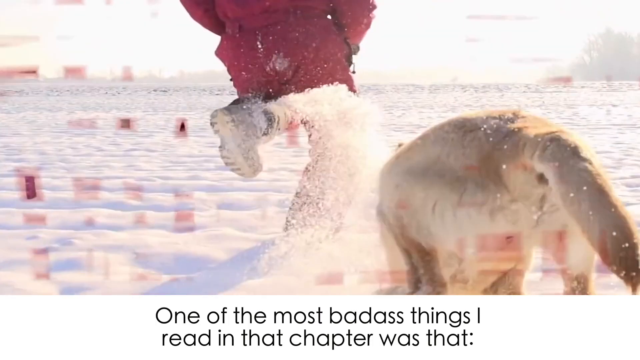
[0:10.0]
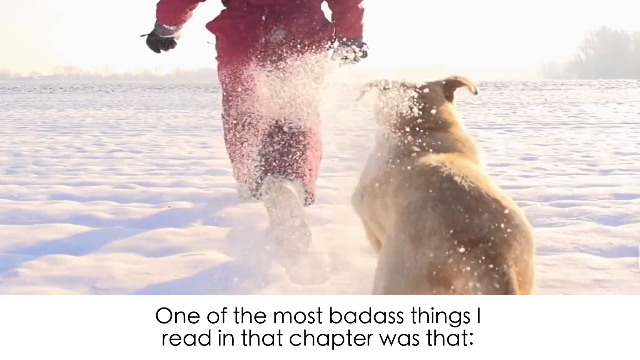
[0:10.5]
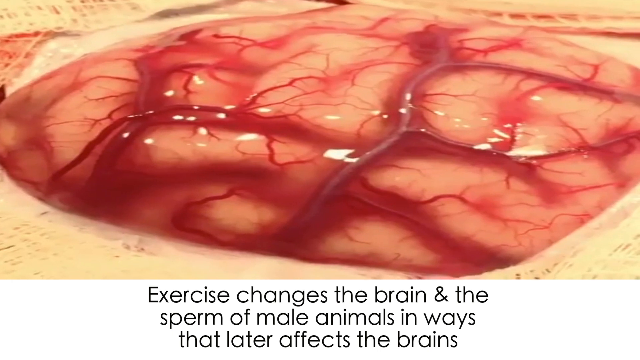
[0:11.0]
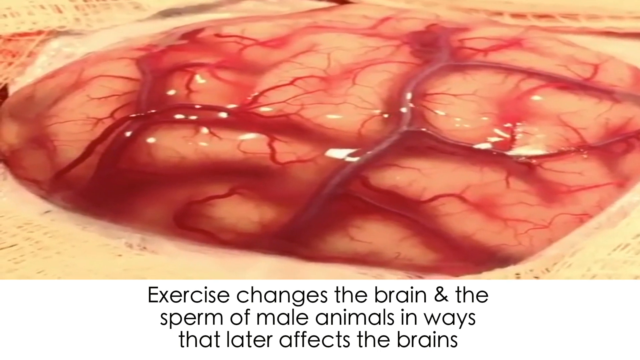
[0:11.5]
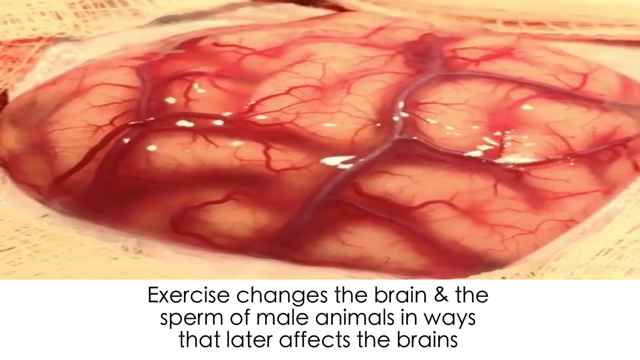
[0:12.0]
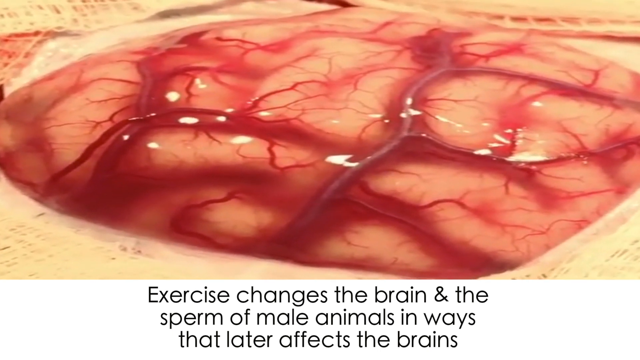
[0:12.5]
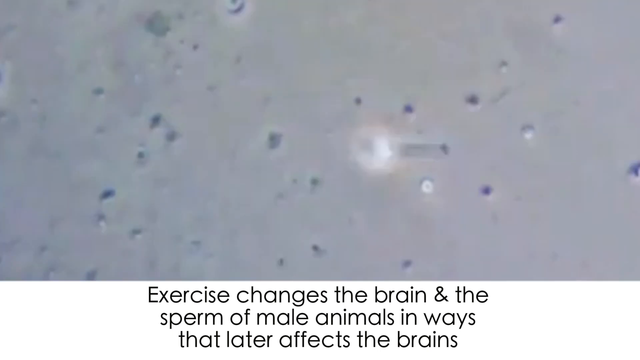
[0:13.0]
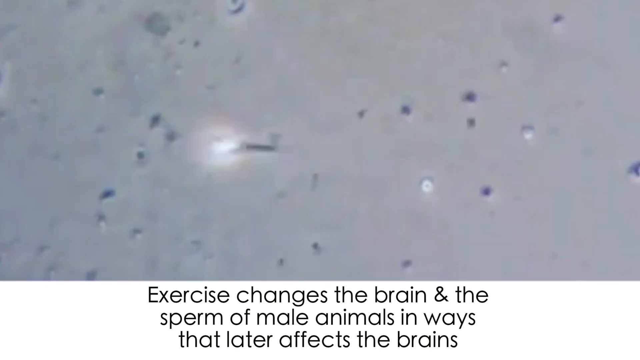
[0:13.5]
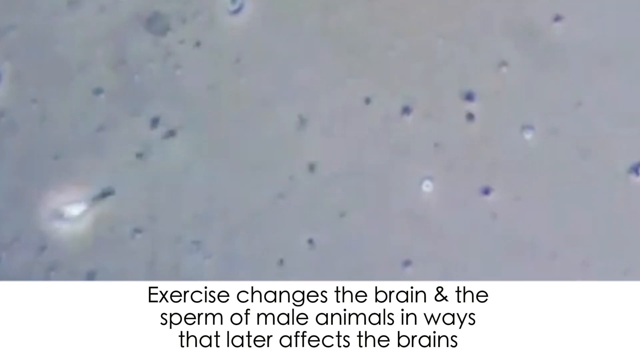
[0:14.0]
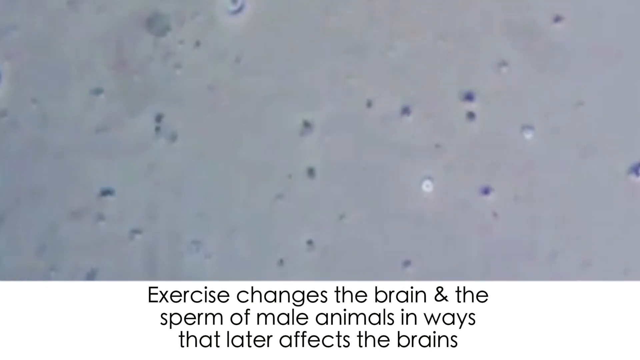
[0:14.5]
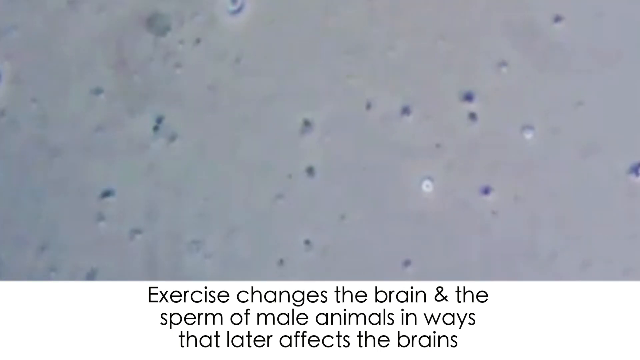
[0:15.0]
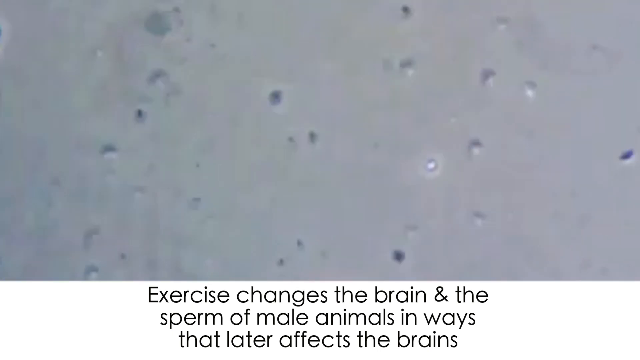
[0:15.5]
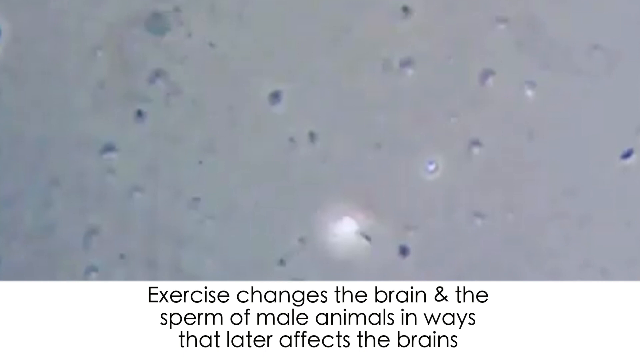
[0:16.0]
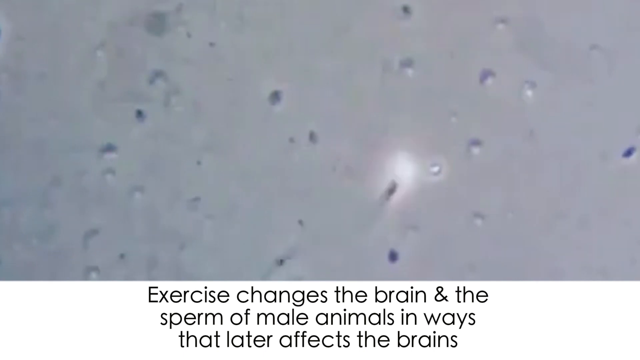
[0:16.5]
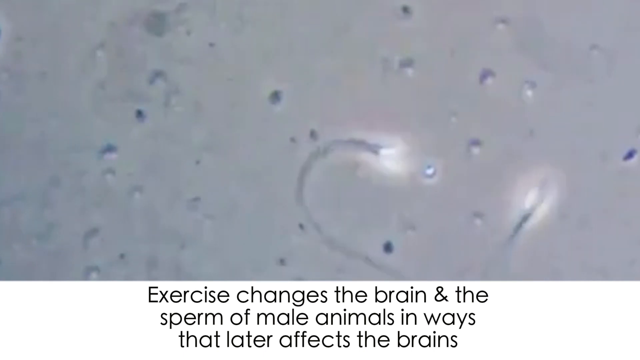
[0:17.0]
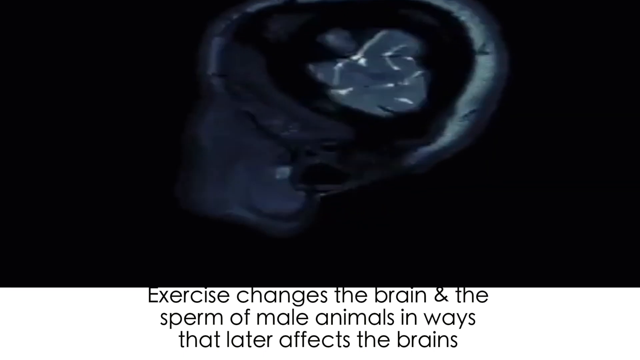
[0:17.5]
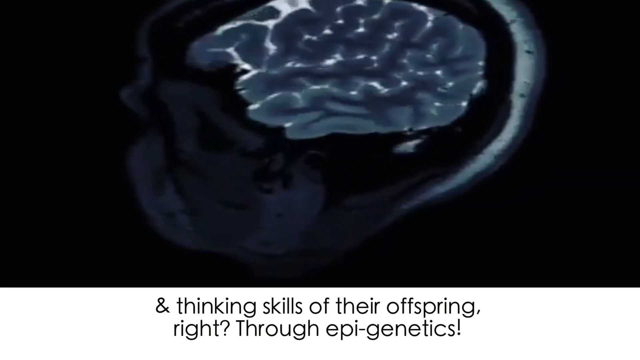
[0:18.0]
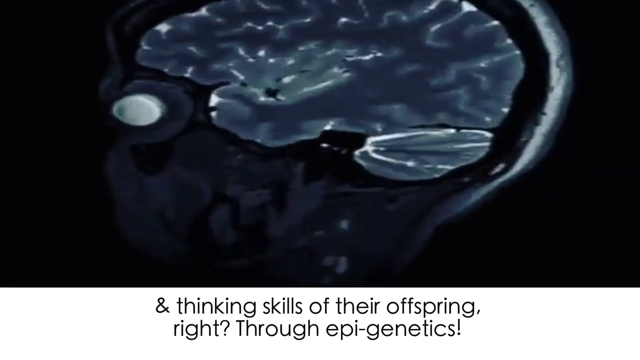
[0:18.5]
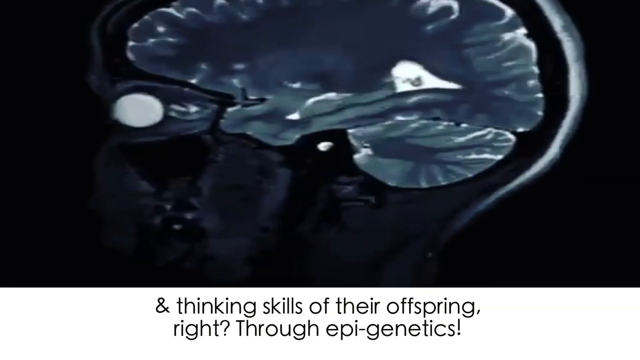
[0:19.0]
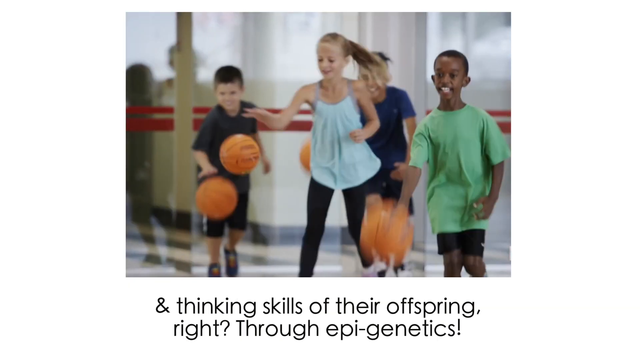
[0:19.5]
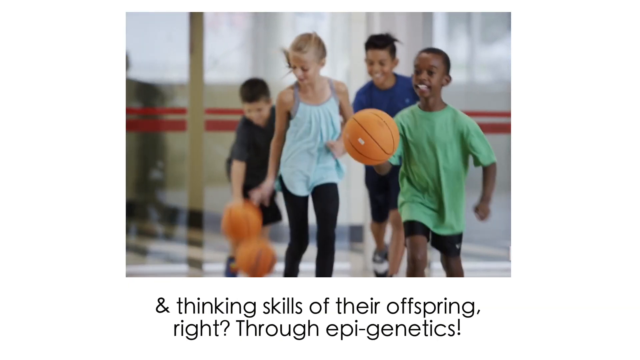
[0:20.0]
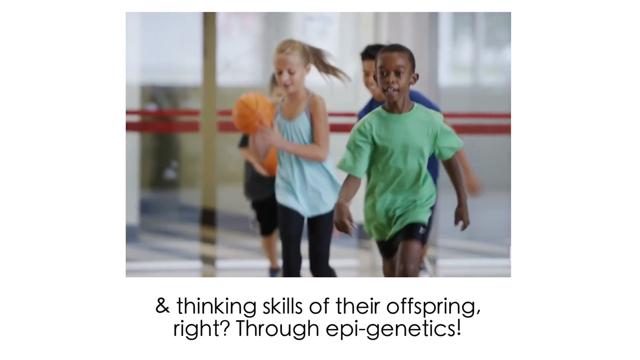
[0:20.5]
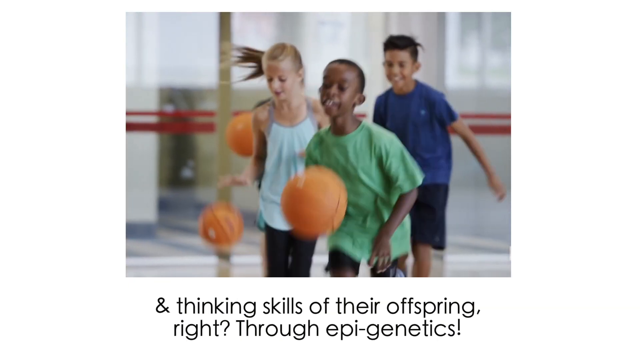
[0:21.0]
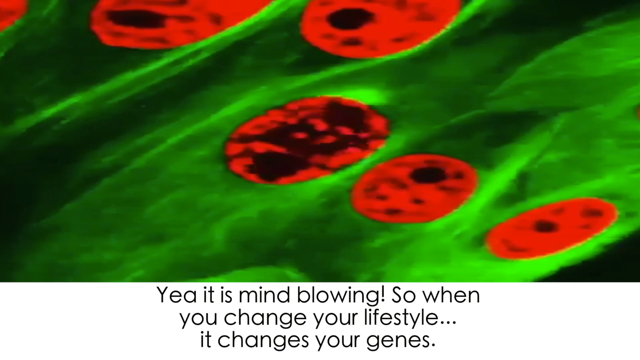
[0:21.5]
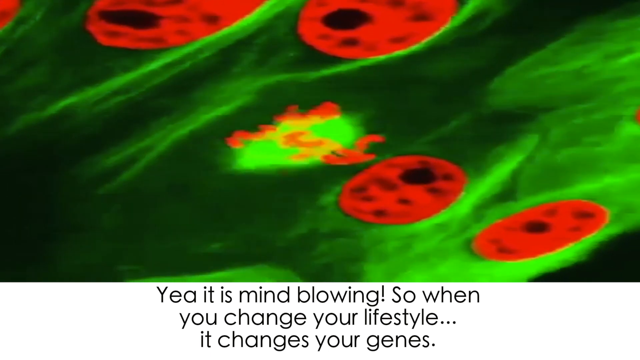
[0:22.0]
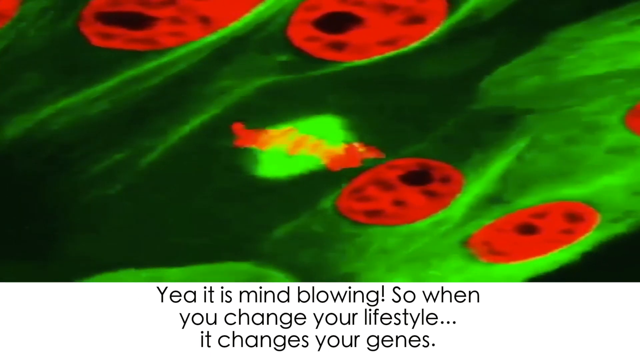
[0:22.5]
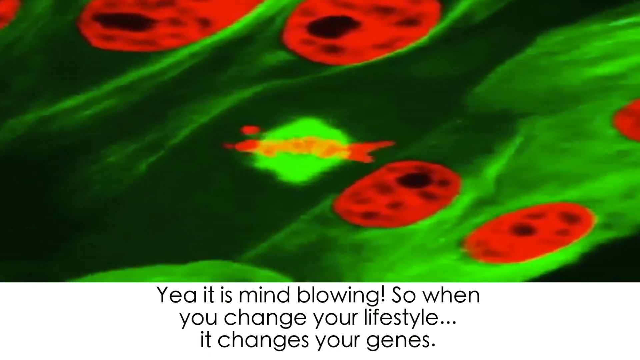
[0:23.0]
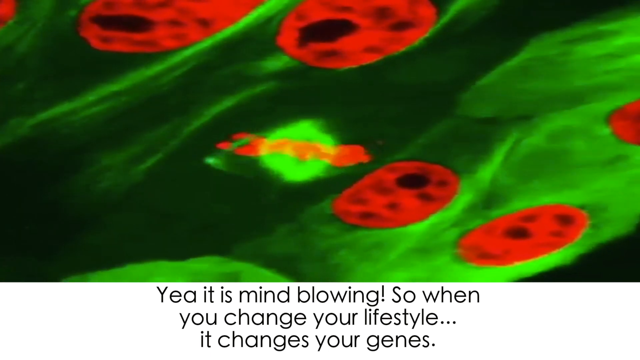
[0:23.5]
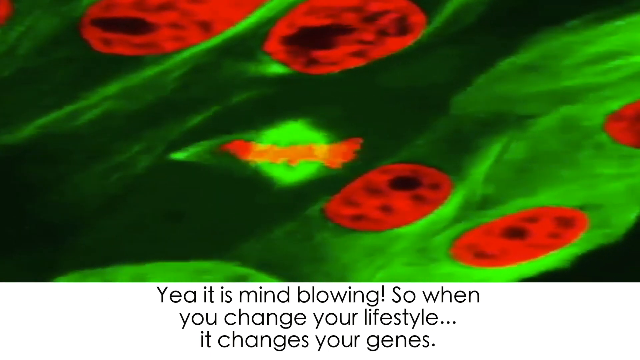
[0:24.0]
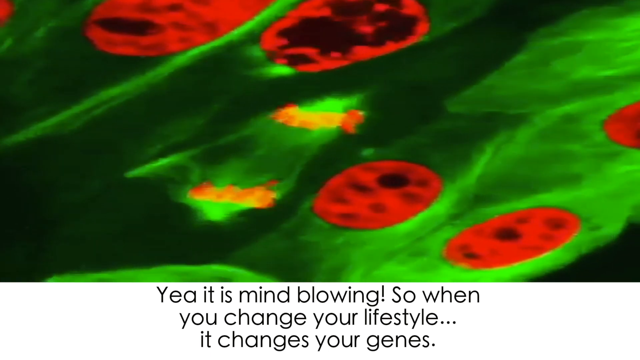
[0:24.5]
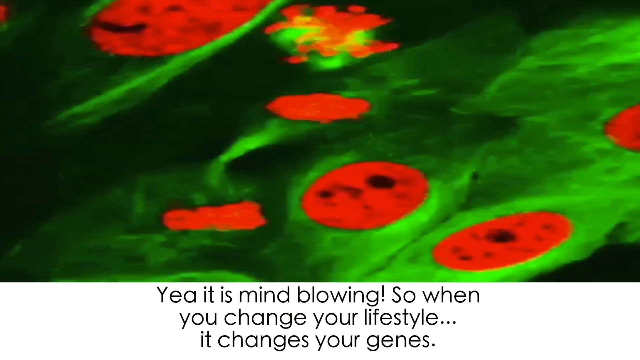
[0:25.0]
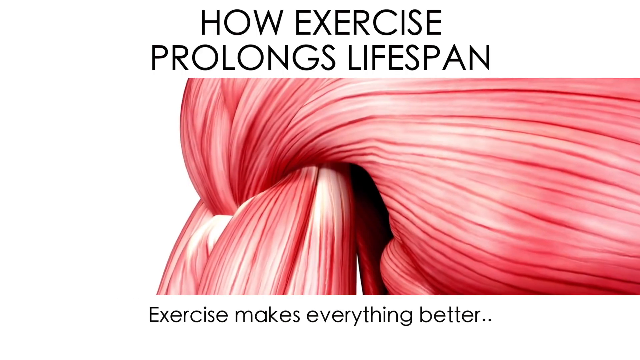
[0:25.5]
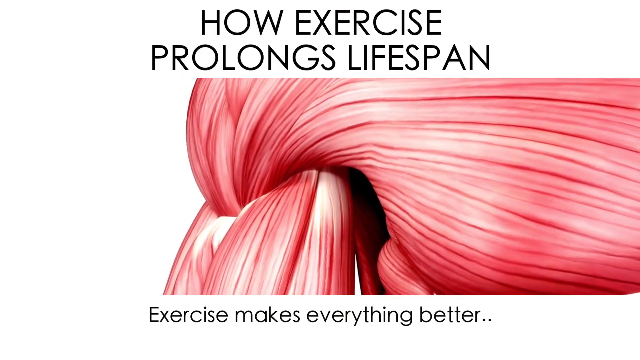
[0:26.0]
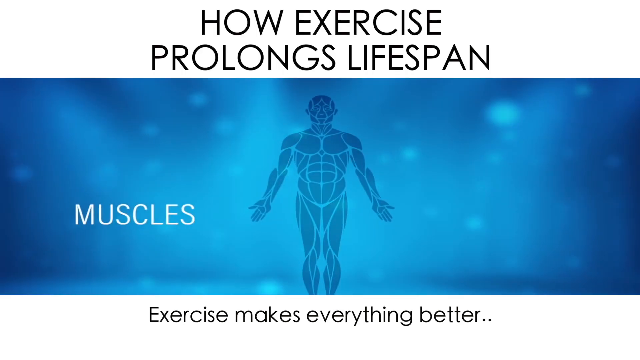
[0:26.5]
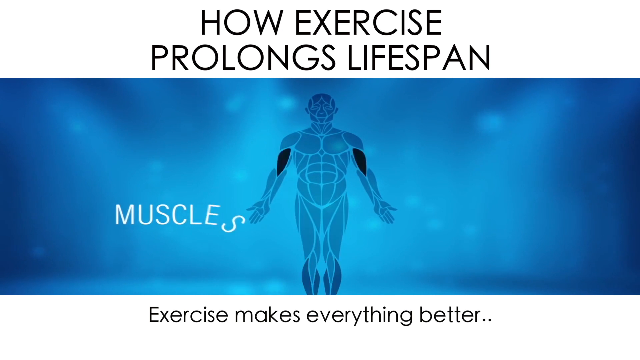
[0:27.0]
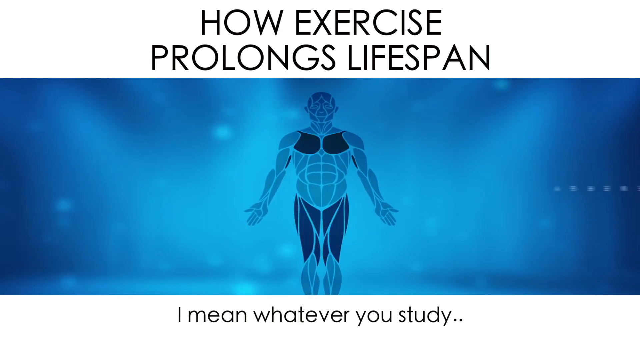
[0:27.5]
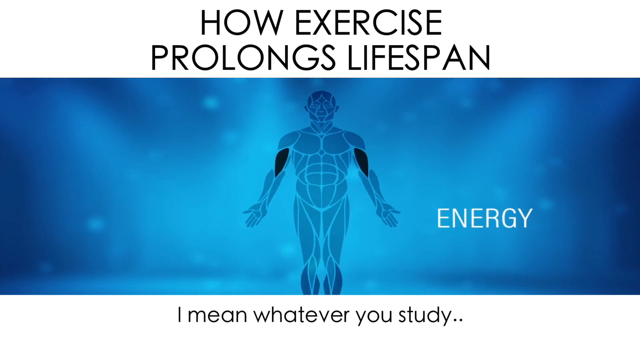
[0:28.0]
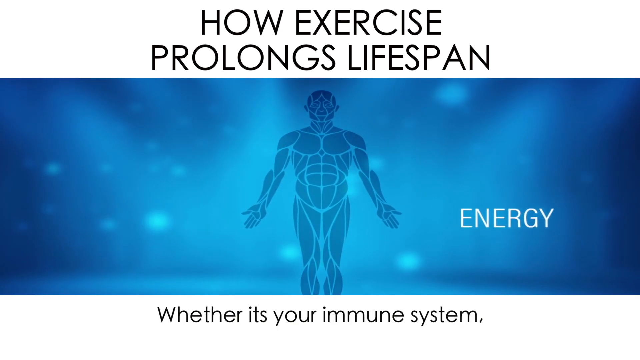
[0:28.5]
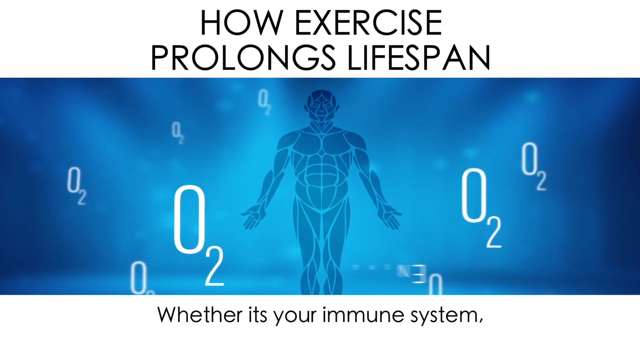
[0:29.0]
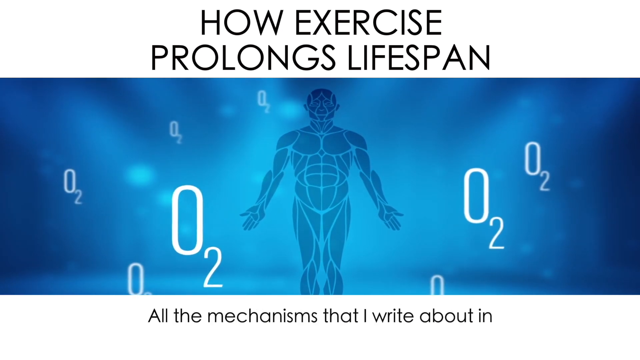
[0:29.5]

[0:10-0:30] The subtitle reads "one of the most badass things i read in that chapter was that exercise changes the brain and the sperm of male animals in ways that later affects the brains and thinking skills of their offspring and this is through epigenetics". This is paired with a series of graphics, videos and photos: people running with their dog, then a brain, then what looks like a sperm traveling, then an MRI of the brain, then a photo of kids playing, including playing basketball. Next, DNA-like structures appear to be changing or mutating in some way, followed by an animation of muscles on the body with text reading "muscles and energy".